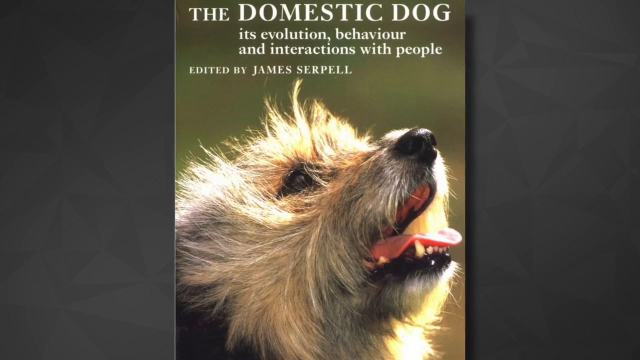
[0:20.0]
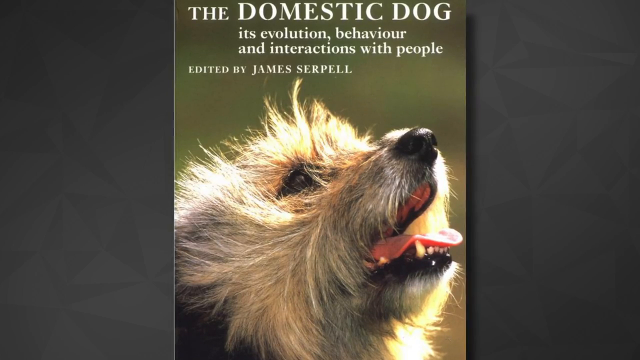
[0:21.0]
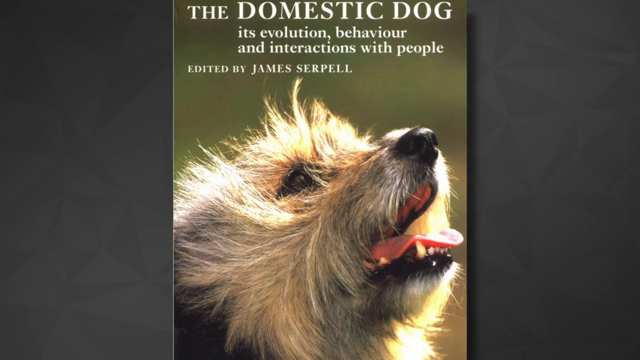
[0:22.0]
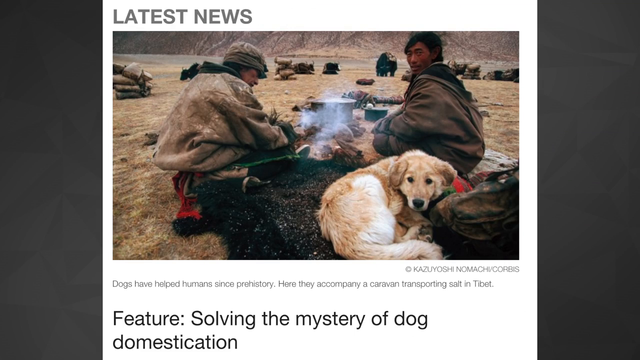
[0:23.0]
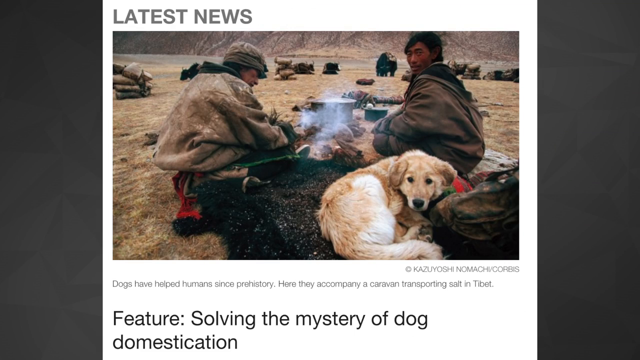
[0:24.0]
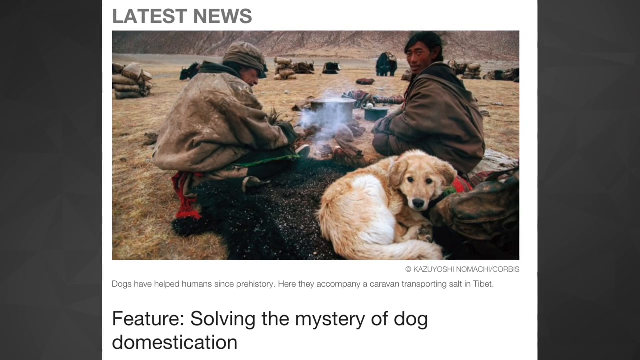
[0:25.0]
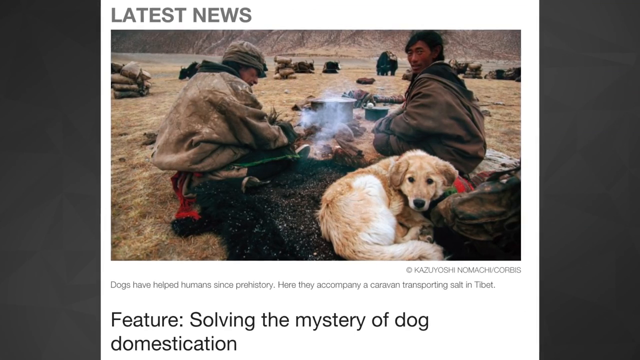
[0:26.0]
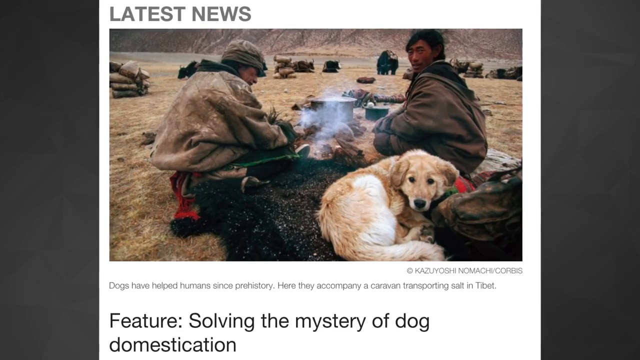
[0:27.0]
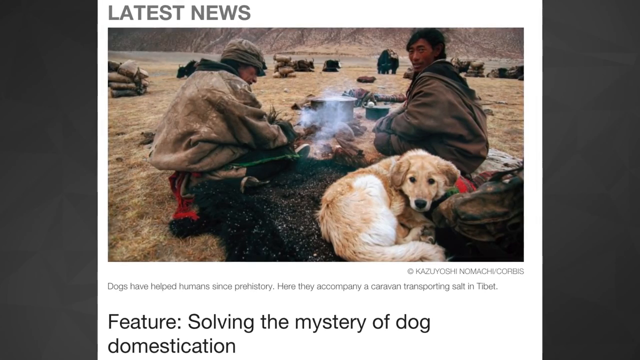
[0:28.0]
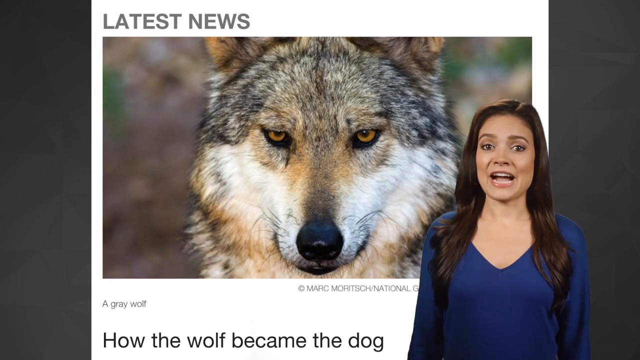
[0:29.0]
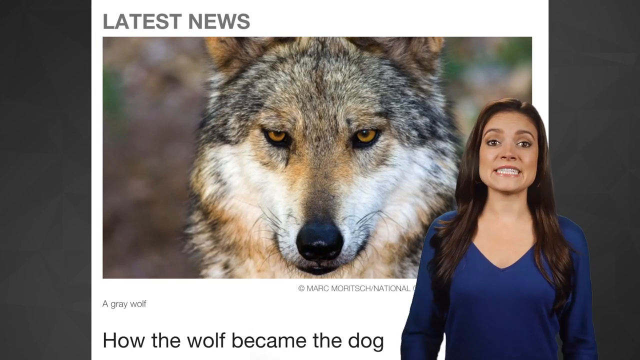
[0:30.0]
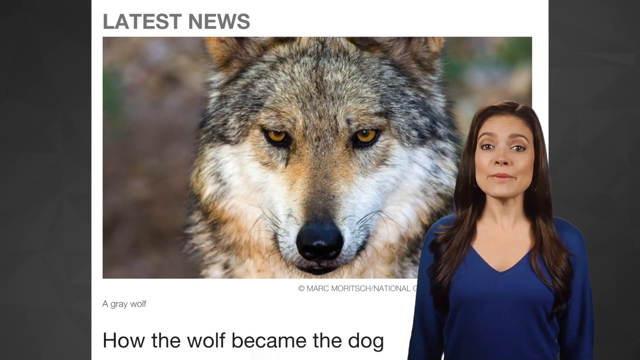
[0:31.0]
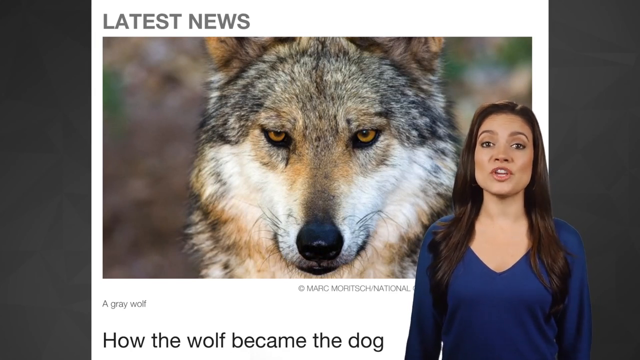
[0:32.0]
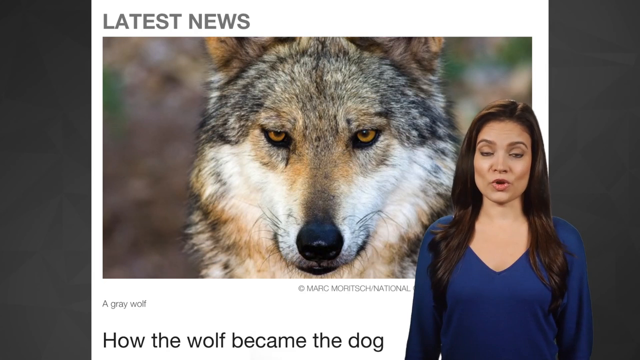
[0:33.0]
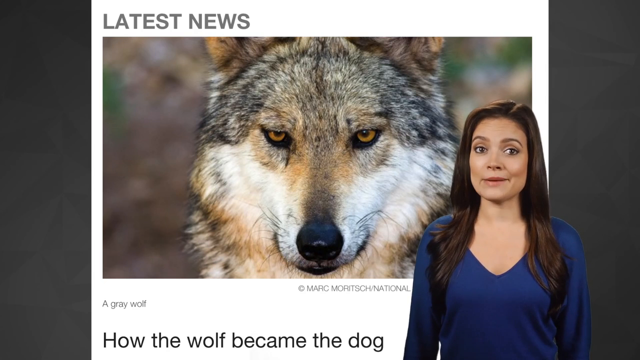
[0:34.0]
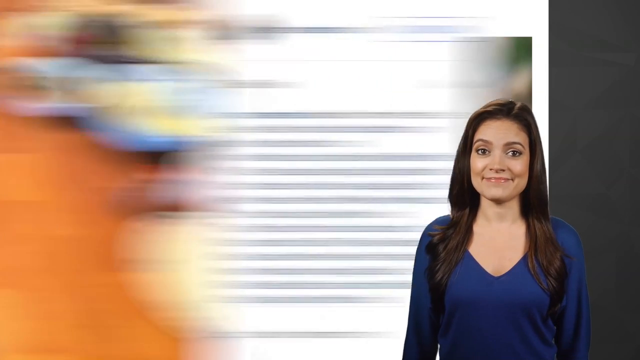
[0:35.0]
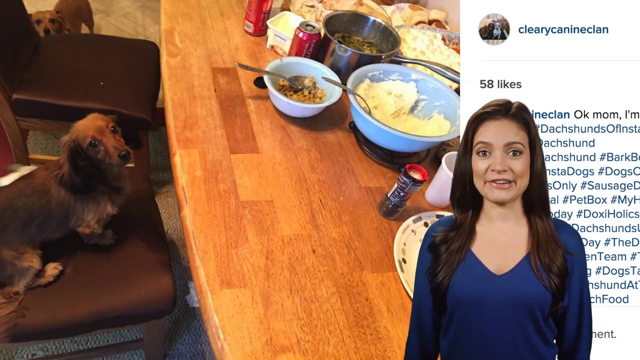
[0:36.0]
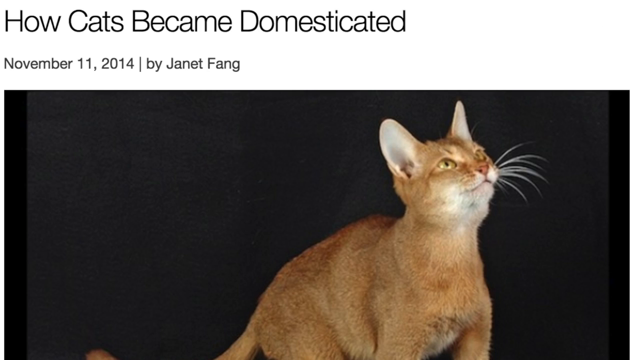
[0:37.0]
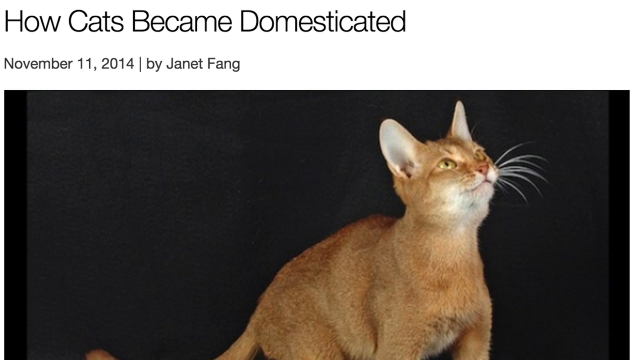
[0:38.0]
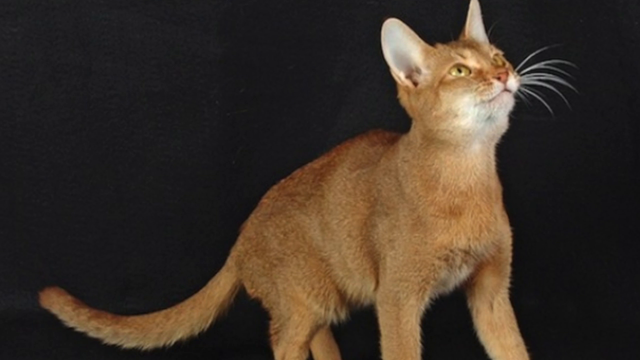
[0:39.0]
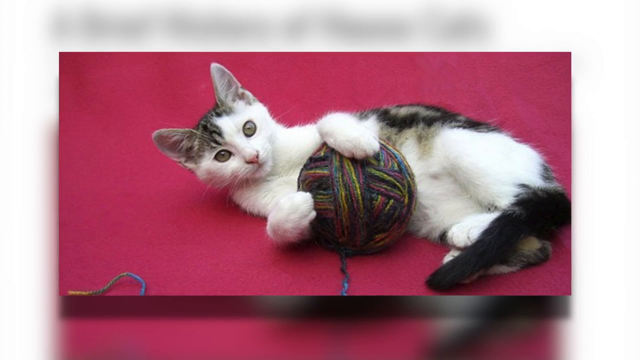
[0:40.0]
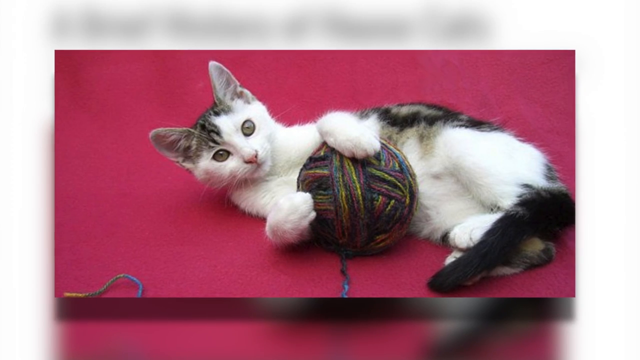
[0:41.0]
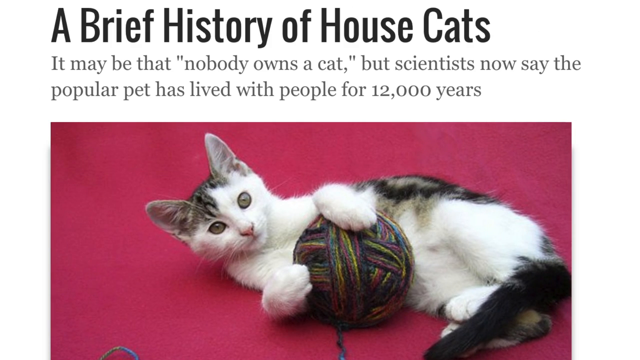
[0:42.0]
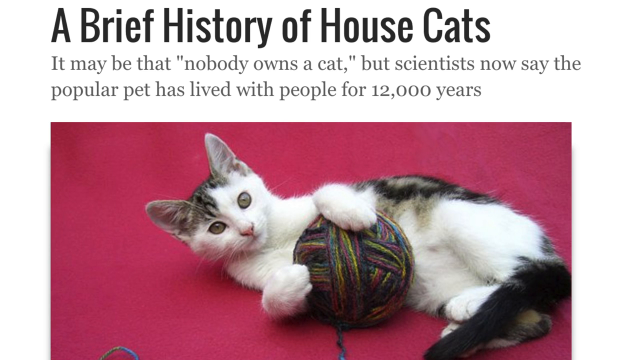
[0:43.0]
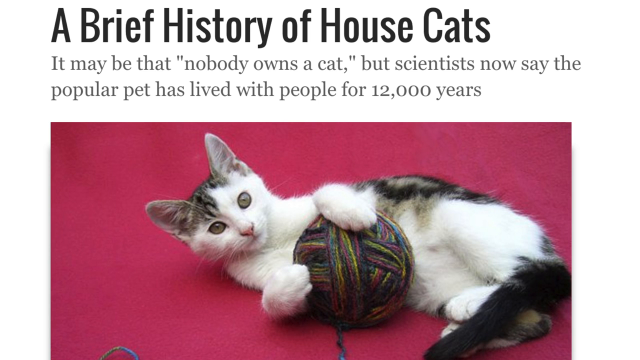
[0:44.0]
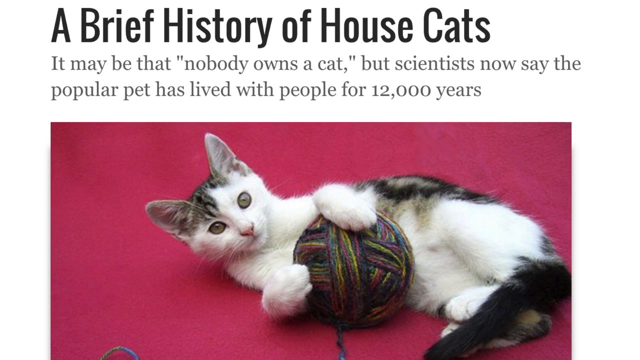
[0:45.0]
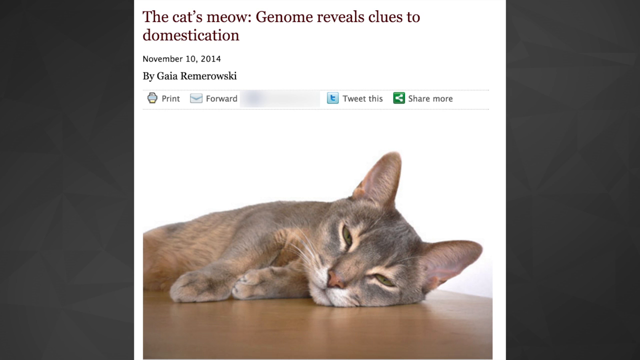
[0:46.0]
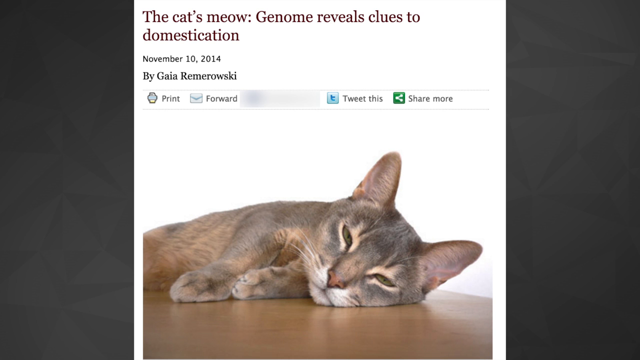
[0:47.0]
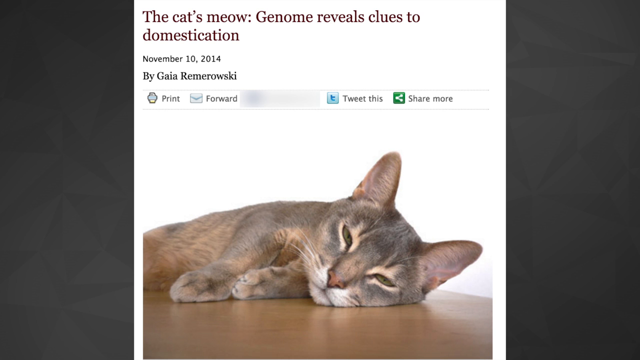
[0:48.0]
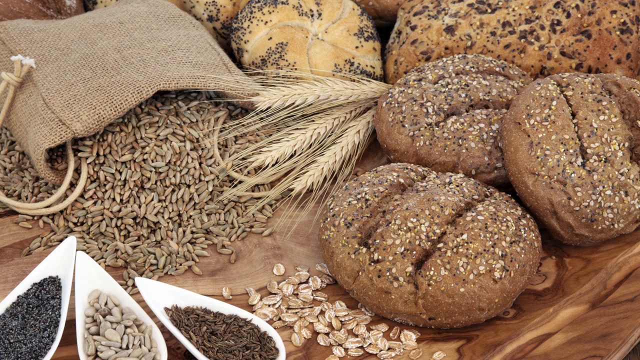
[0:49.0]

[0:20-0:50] What looks like a book cover shows the face of a small dog looking up, with the title "the domestic dog, its evolution, behavior and interactions with people" and "Edited by James Serpell". The video changes to what looks like another website screenshot titled "Latest News", with a picture of some indigenous people camping outside. They are in the middle of making food, and near them a dog is laying on the ground. The text underneath reads "dogs have helped humans since prehistory. Here they accompany a caravan transporting salt in Tibet", and right below it, in a bigger font, "feature solving the mystery of dog domestication". Another screenshot in the same layout follows, with "the latest news" on top; this time the picture is a close-up of a wolf's face, captioned "a grey wolf". The cutout of the girl talking to the camera is overlaid on this picture. The image beneath her changes to what looks like an Instagram screenshot: the picture is on the left, and on the right are the profile name, "clearlycanineclan", and the caption. The picture shows a table inside a house with food laid out and a small dog on top of the chairs right beside it, looking at the camera. Next comes a picture of an orange cat on a black background. Then a different cat picture appears: on a white background, a picture in the middle of the screen has a magenta background with a white cat with dark dots laying on the ground, playing with a yarn ball. Text appears at the top of this picture reading "a brief history of house cats". Then a screenshot from another website appears, titled "The Cat Meow, Genome Reveals Clues to Domestication", with a picture of a very sleepy cat on a table underneath.